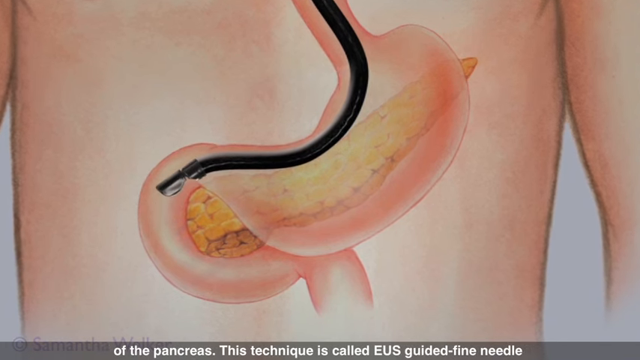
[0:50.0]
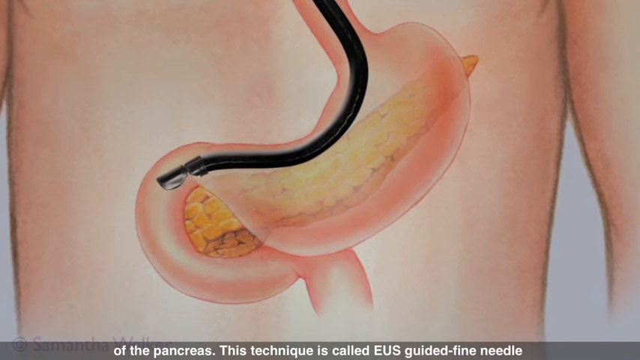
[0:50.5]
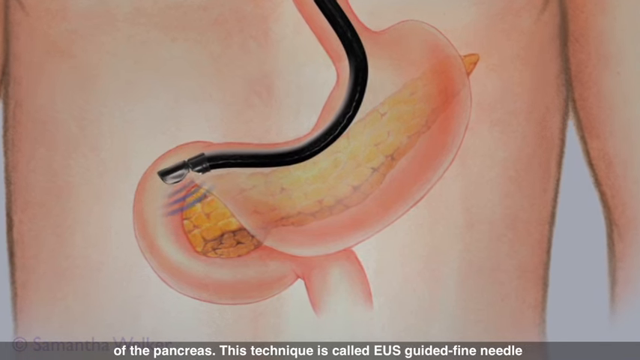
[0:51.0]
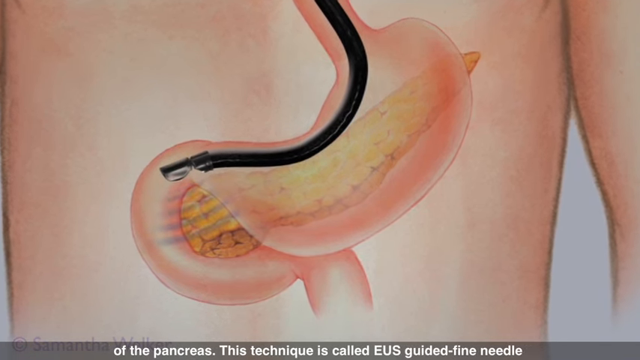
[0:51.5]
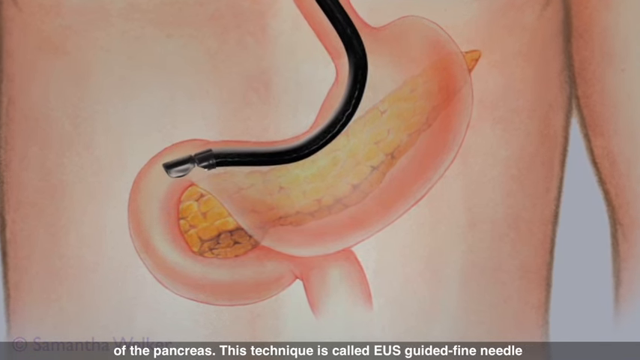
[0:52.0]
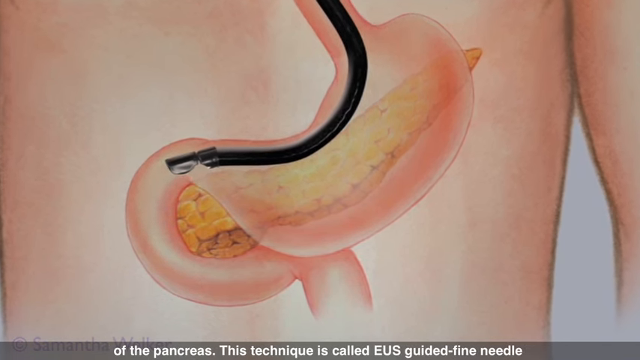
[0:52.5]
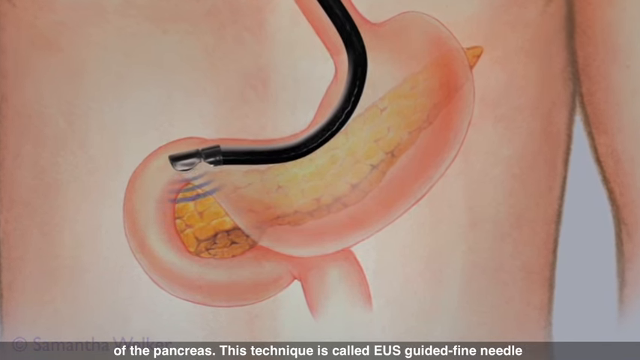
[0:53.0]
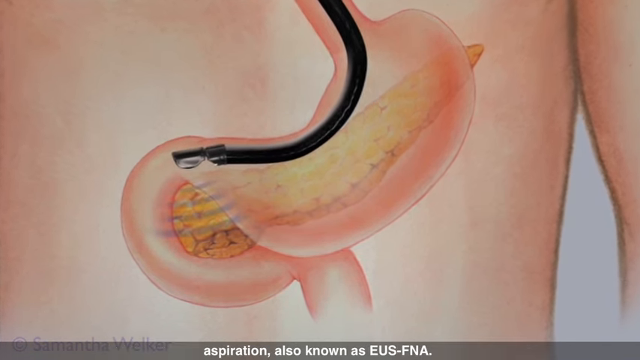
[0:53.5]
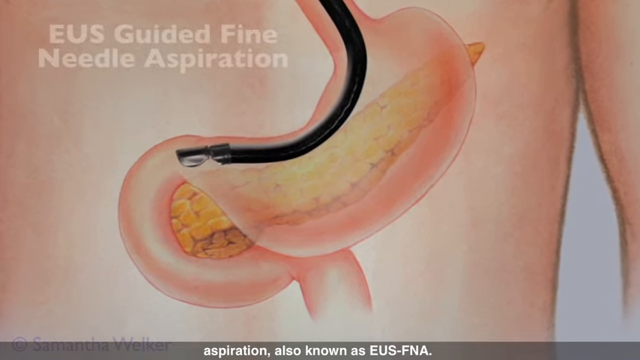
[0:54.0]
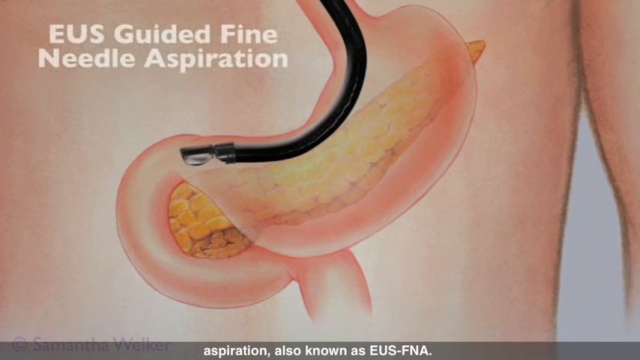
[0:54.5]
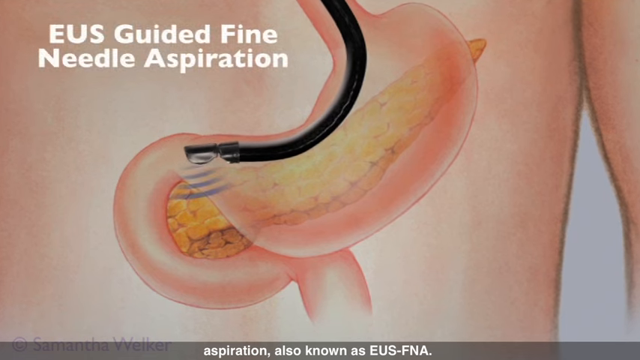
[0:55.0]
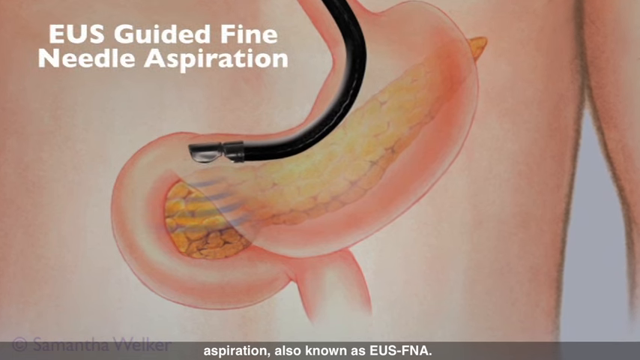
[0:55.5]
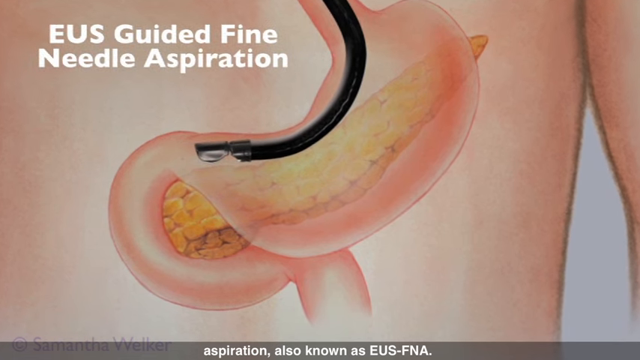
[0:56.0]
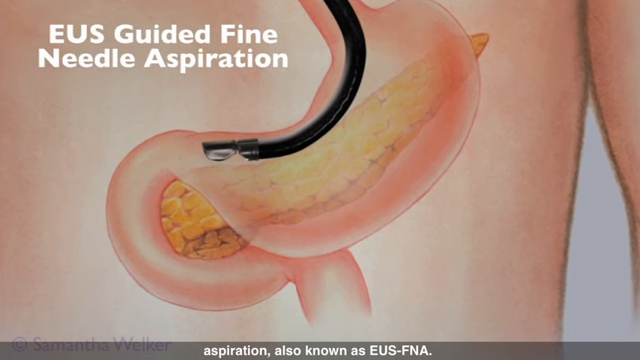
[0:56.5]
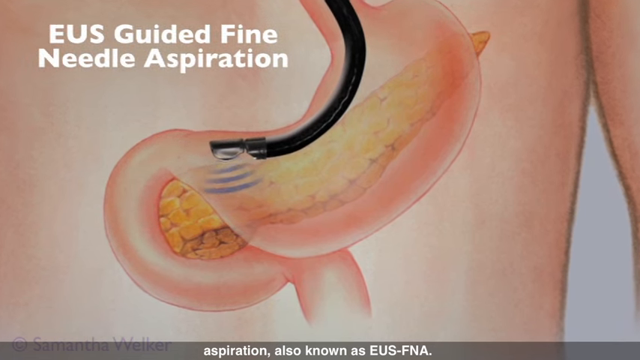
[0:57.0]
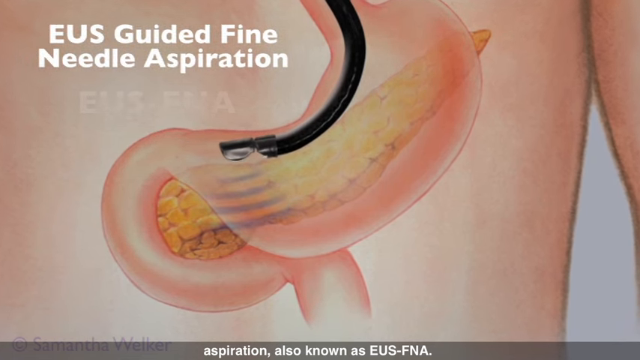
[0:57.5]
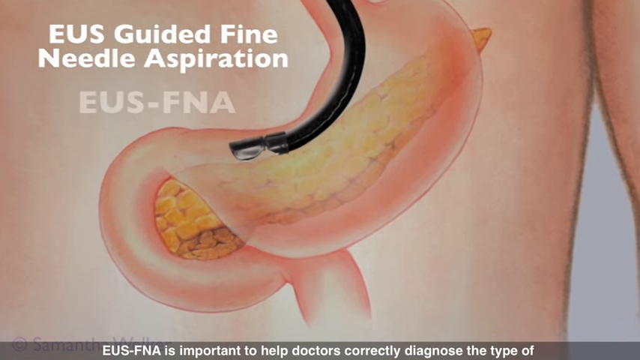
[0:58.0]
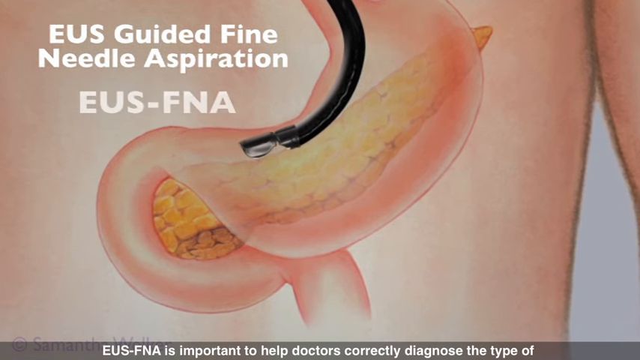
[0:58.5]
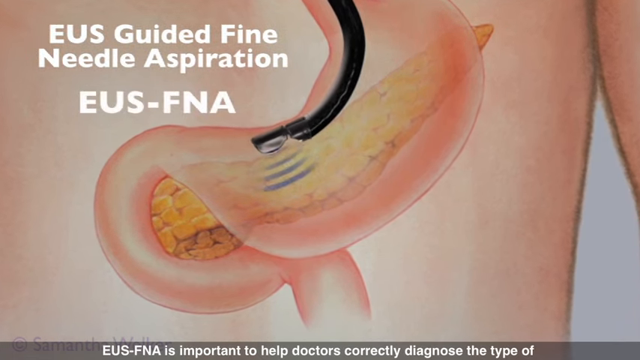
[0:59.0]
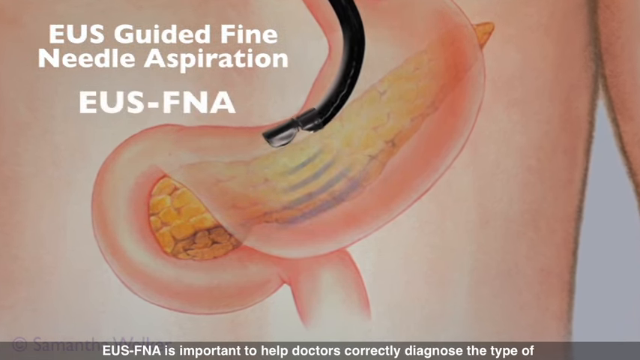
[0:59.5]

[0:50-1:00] The man's digestive tract remains in view, with the ultrasound probe inside it, in the stomach and upper colon area. The probe looks like a long, thin, black flexible tube, and the probe at the end of the tube appears to be metal, shiny and black. Navy blue squiggly lines representing ultrasound waves are emitted away from the probe tip, this time in a downward direction. In the upper left corner are the words "EUS, Guided Fine Needle Aspiration". The ultrasound probe backs out of the digestive tract, still emitting the squiggly wave lines downward on the screen.